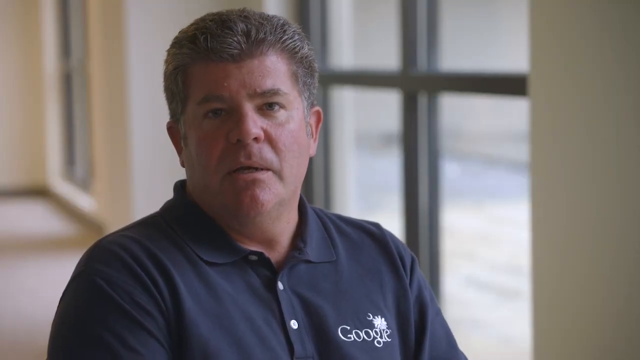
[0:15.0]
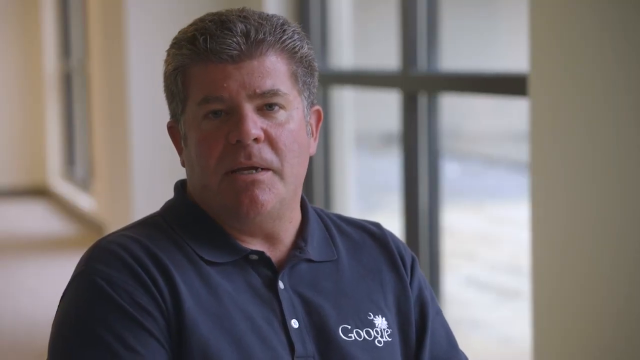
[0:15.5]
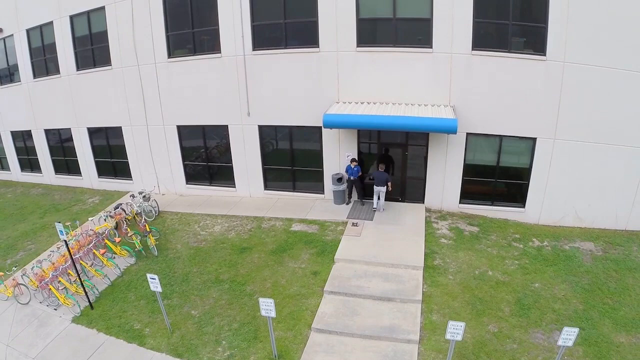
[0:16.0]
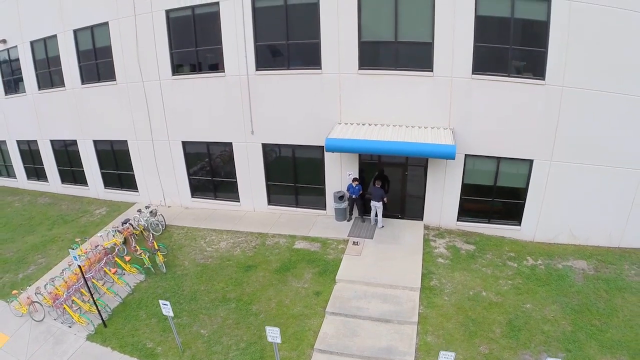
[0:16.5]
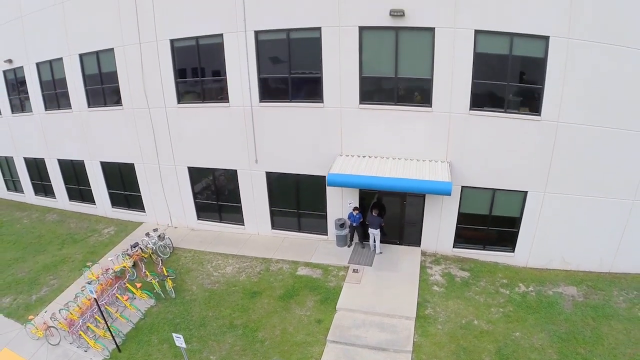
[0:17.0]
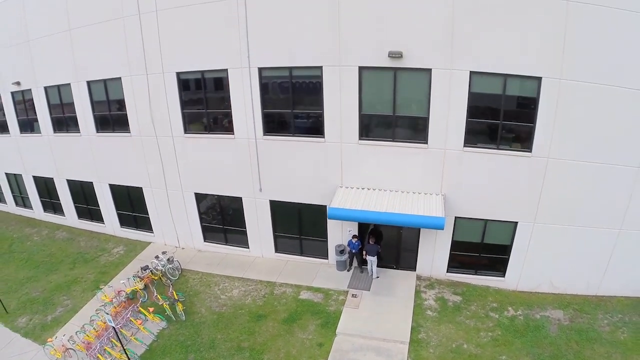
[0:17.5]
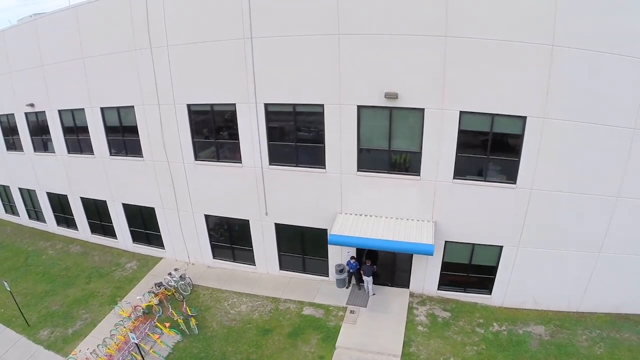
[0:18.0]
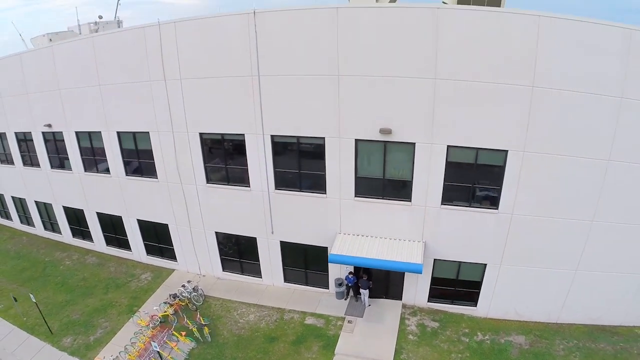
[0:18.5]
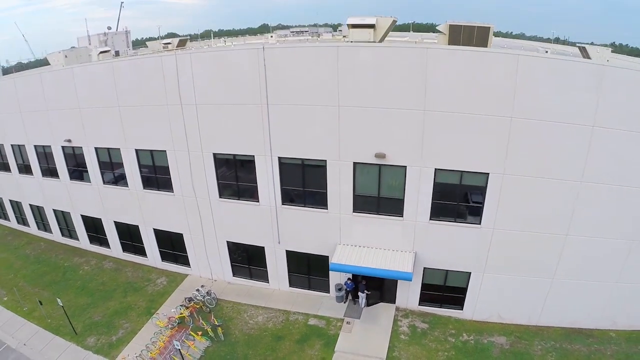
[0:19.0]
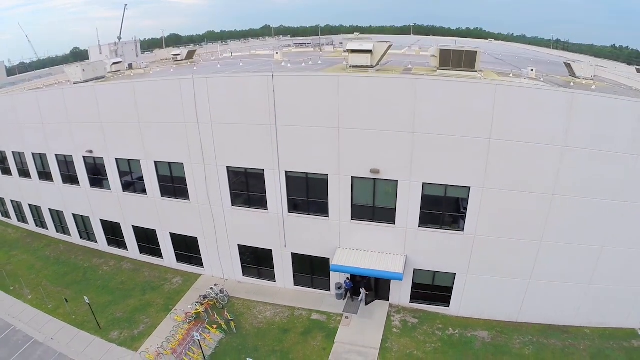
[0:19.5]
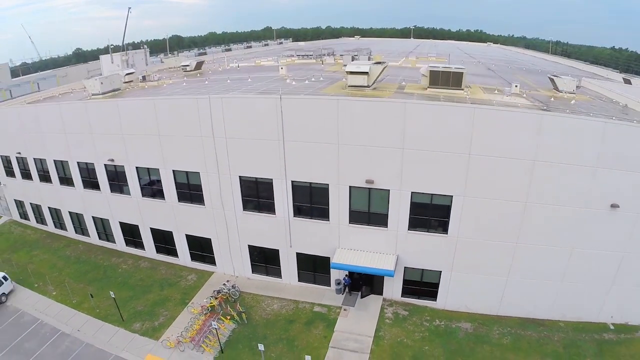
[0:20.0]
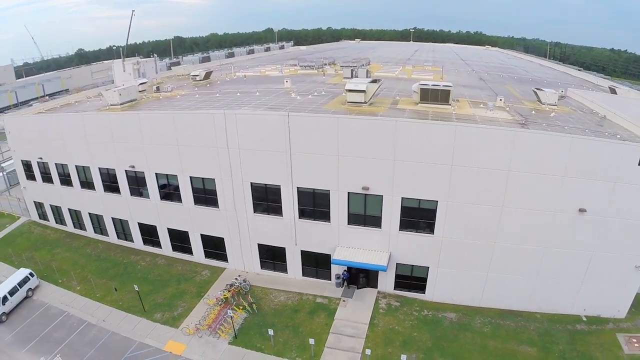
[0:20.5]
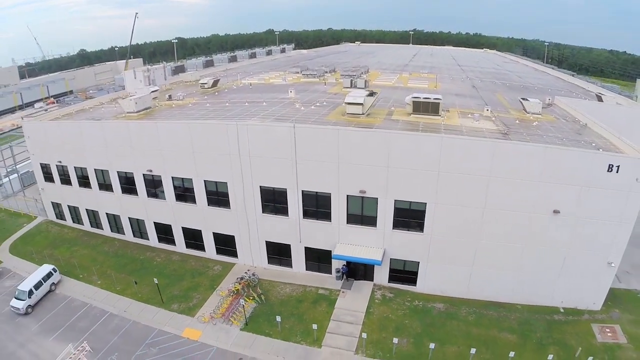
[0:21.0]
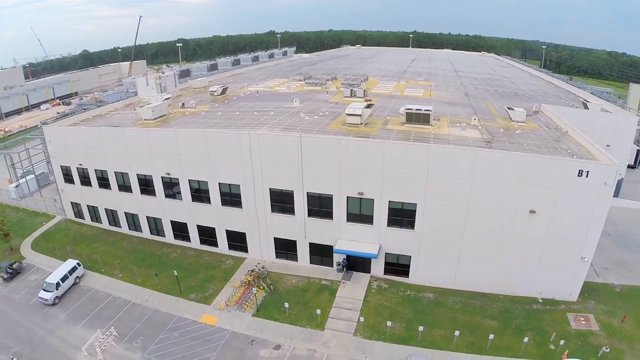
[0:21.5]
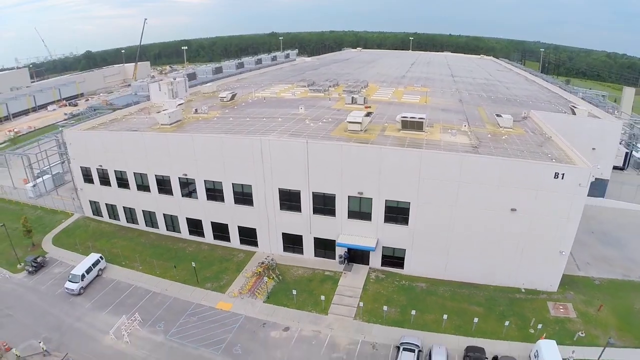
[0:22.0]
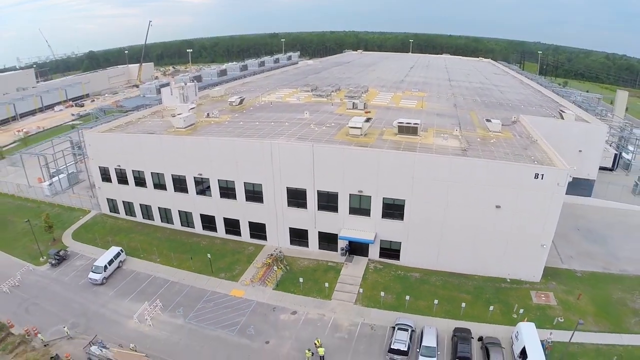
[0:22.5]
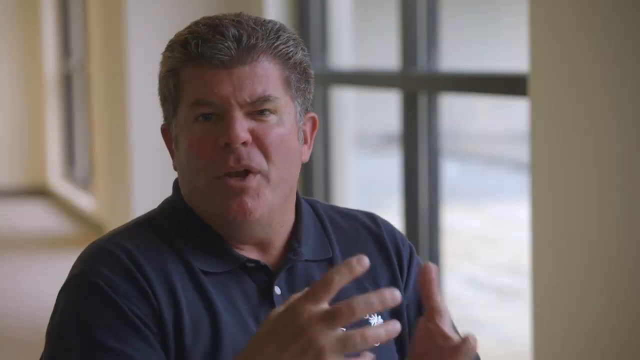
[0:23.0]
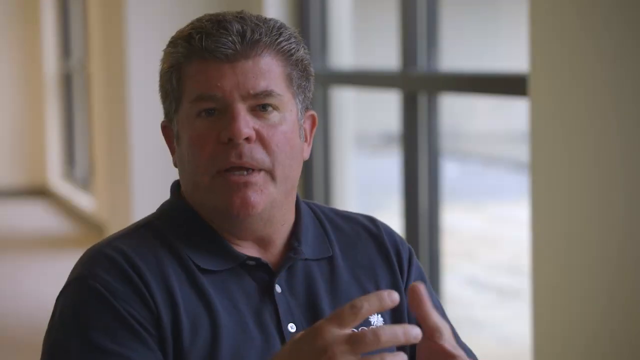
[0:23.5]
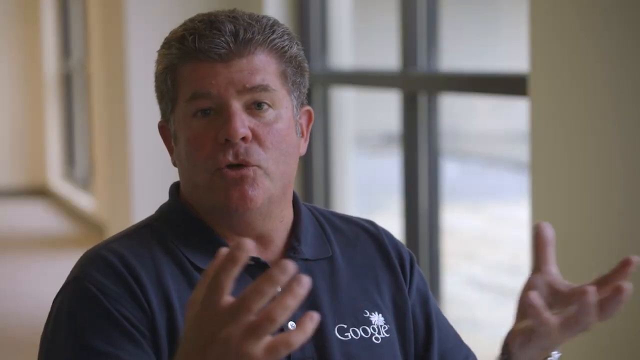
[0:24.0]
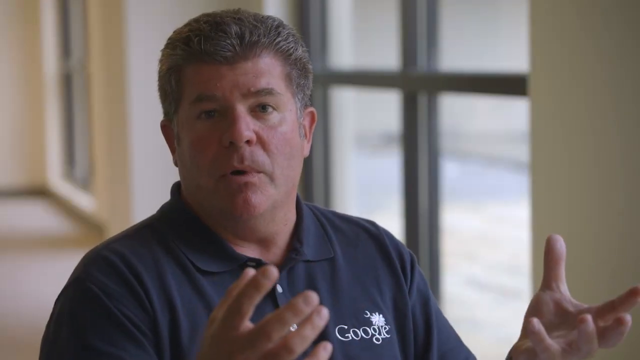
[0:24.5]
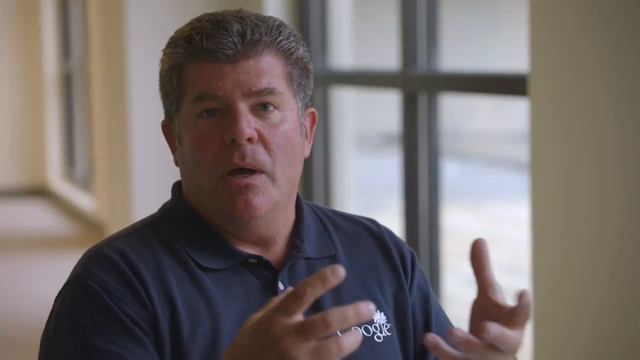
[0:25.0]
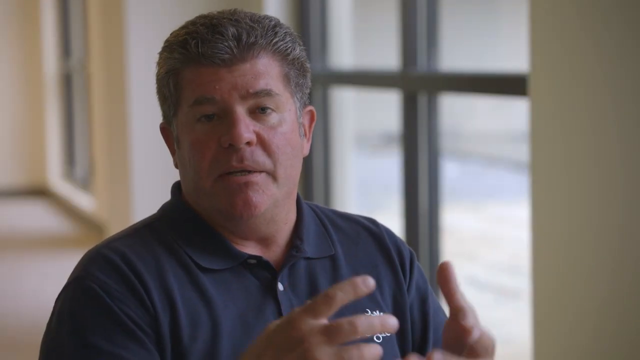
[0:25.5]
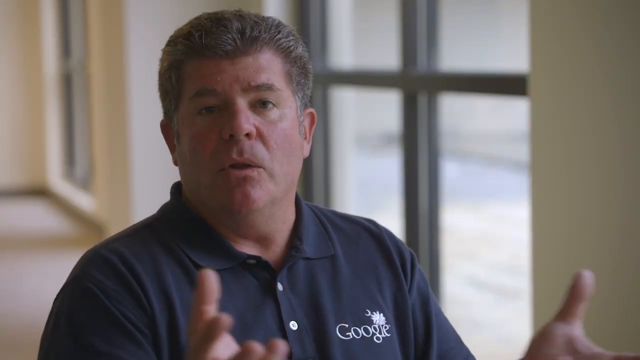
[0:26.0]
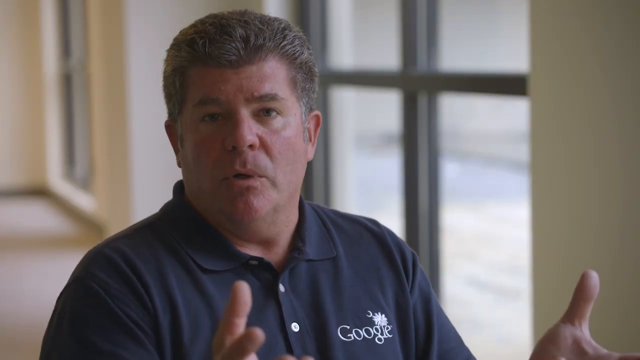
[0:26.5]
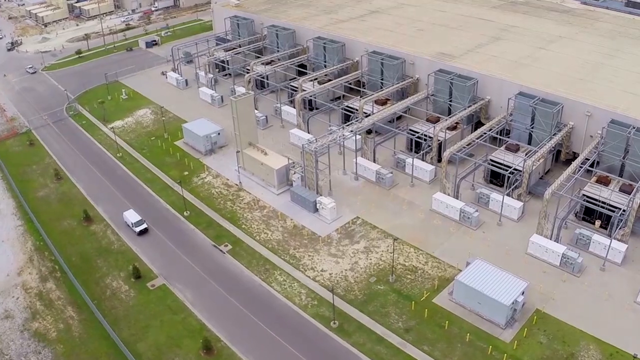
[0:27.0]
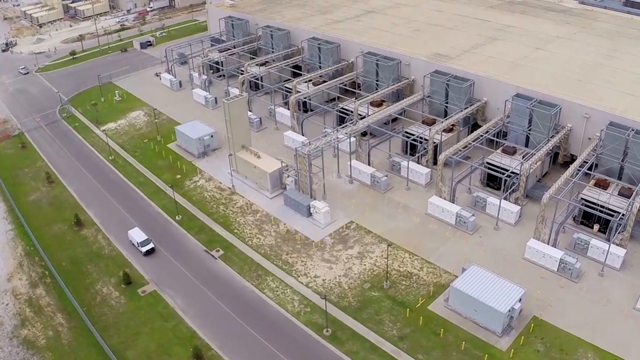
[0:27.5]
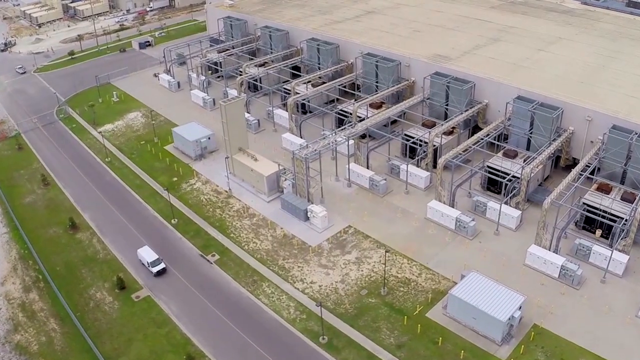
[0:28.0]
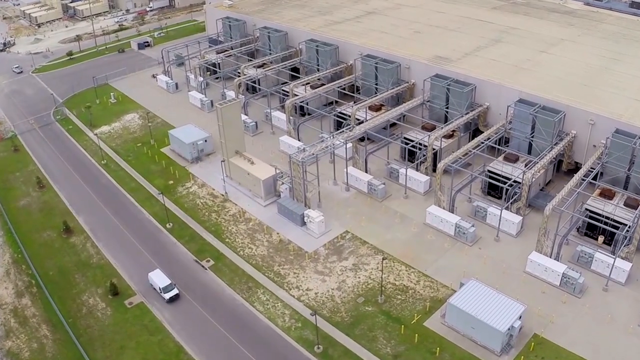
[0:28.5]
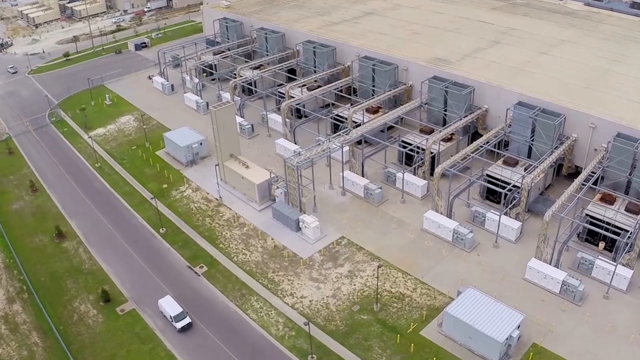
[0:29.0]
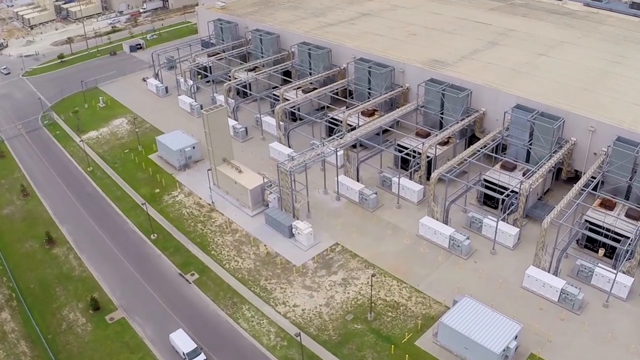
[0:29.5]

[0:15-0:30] The same man continues talking as he is interviewed. The view switches to what looks like drone footage, giving a flying aerial view of the building. He opens the front door, and another man there watches the door. Another building appears that looks to be the data center or something to do with data processing. It has lots of mechanical hardware: a concrete building with metal coming out of its side, most likely for data processing or storage.